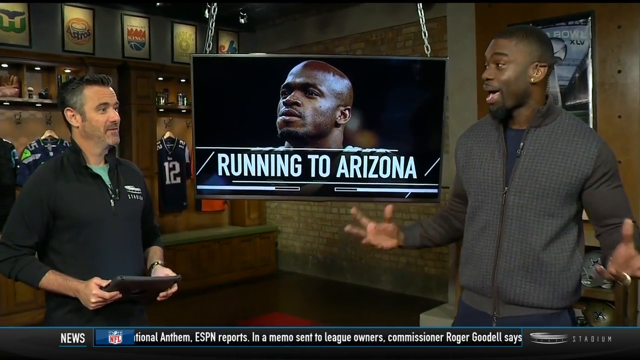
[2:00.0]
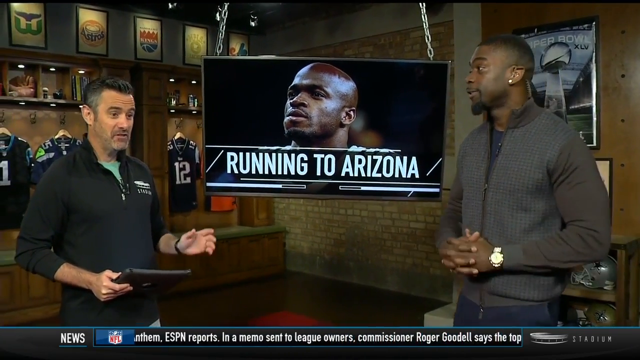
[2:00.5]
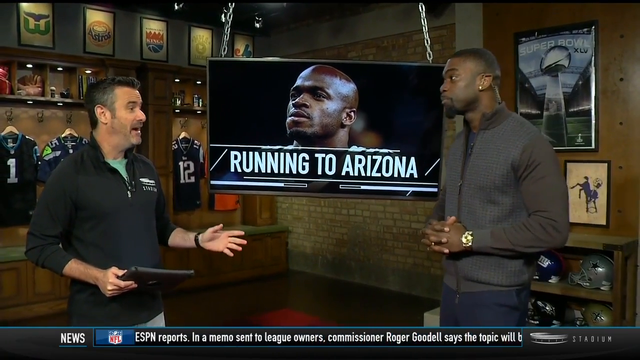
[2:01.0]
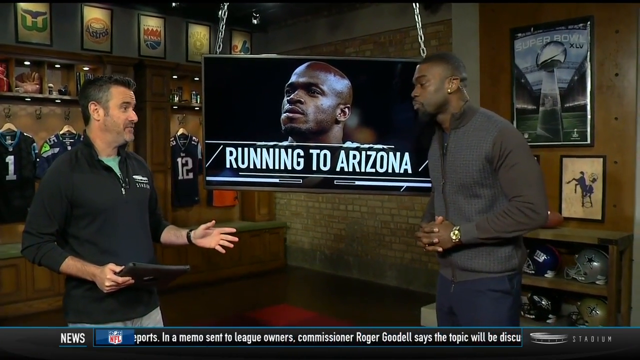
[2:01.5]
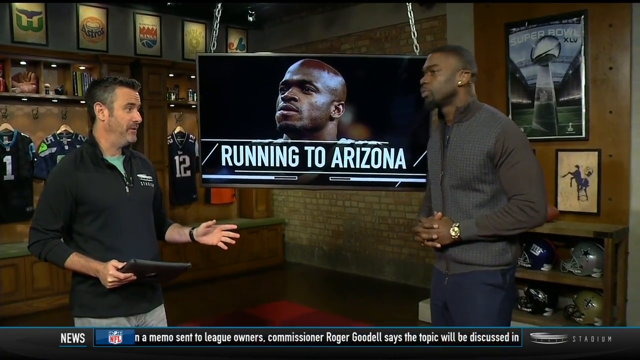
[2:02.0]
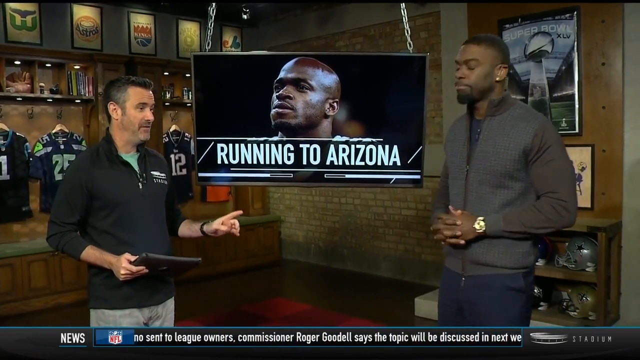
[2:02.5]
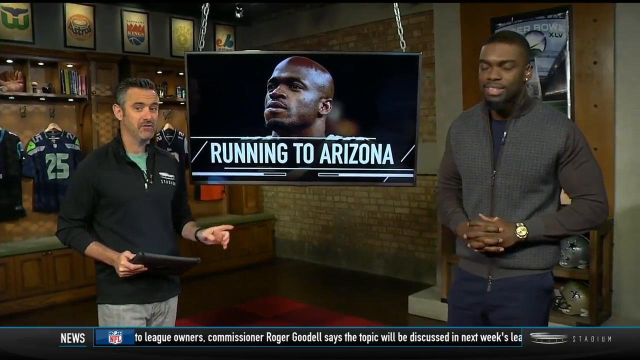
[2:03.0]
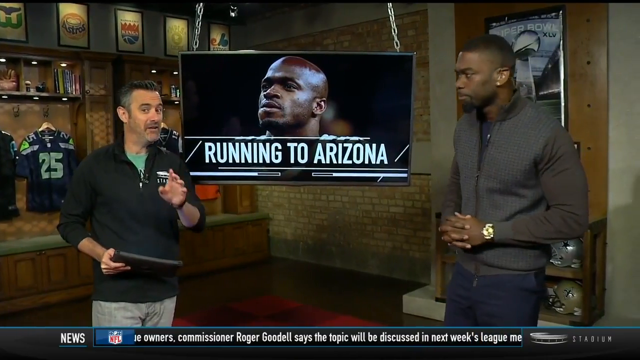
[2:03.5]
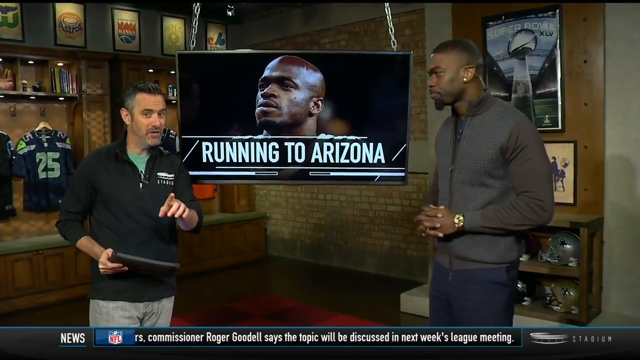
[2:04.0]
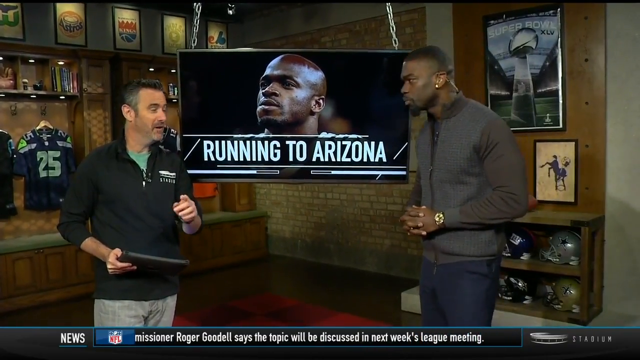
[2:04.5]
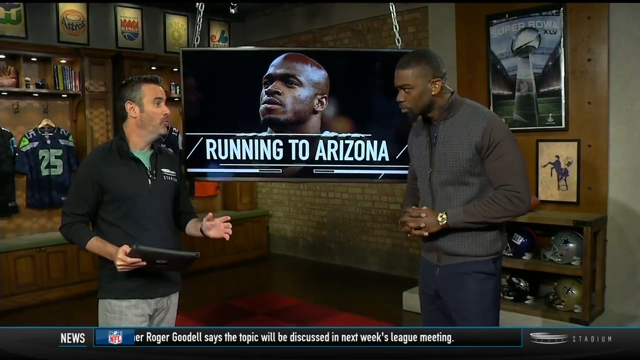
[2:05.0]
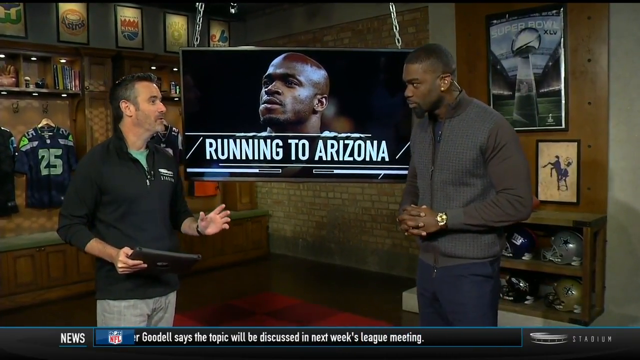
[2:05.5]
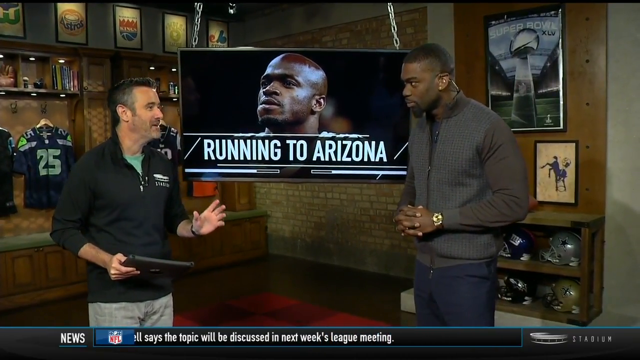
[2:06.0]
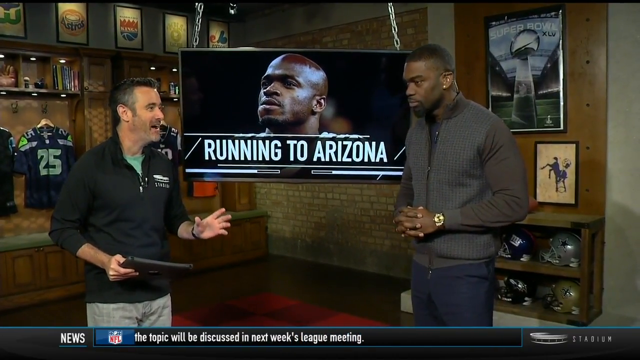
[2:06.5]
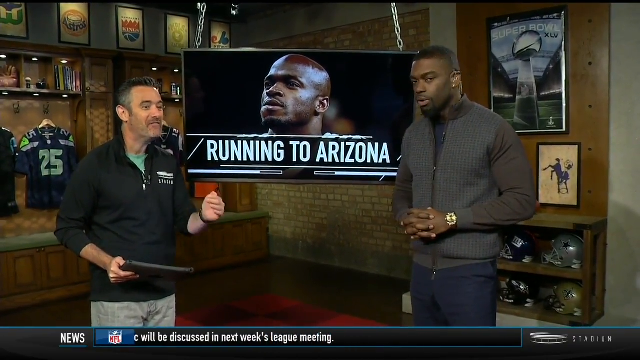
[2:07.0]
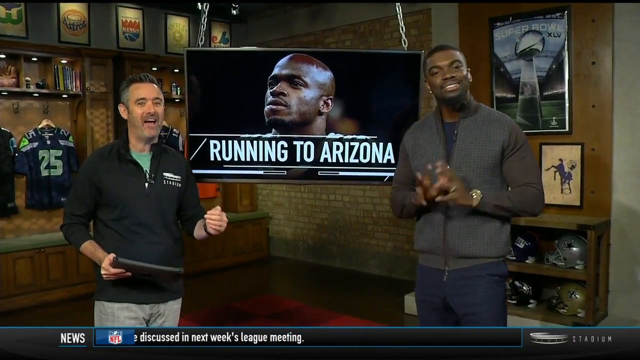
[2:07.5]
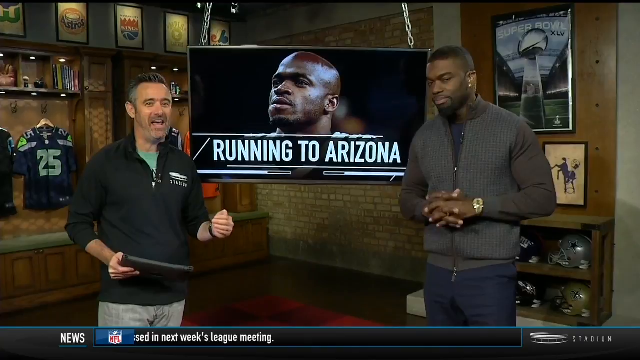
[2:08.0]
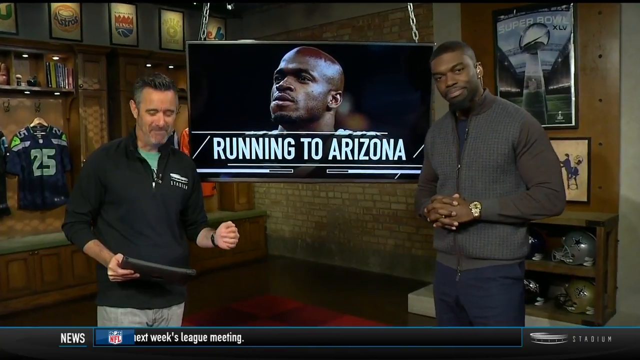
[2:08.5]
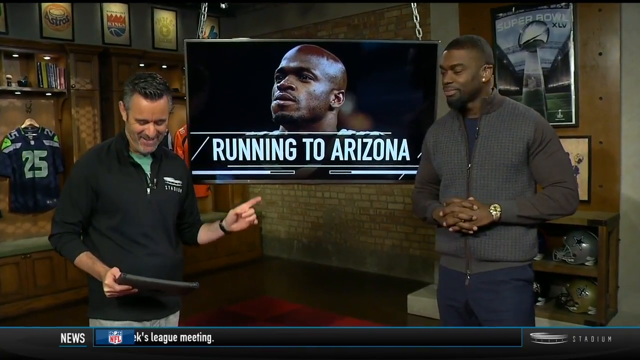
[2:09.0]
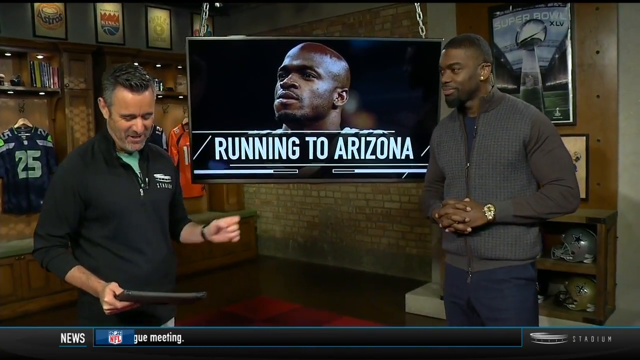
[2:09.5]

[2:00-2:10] The two commentators are still talking to each other. White text now scrolls constantly across the bottom as a ticker, apparently giving updated news and stats on trades and other sports; earlier there was still text at the bottom, and the ticker seems to run through a bit of this part of the video. The man on the left begins talking more, looking down at his computer tablet and pointing with his left hand toward the man on the right.